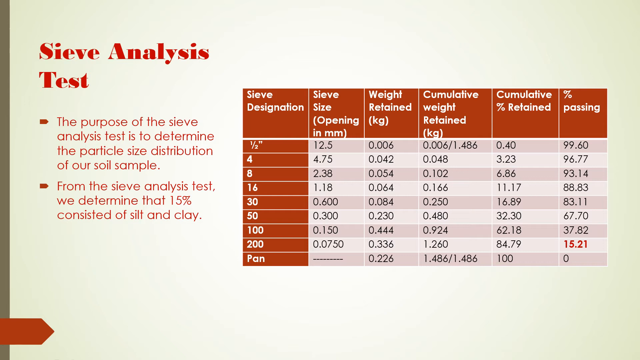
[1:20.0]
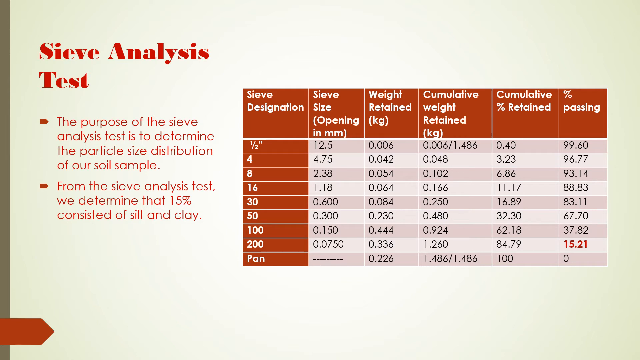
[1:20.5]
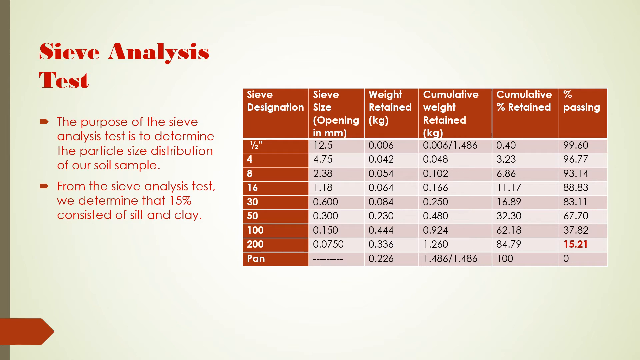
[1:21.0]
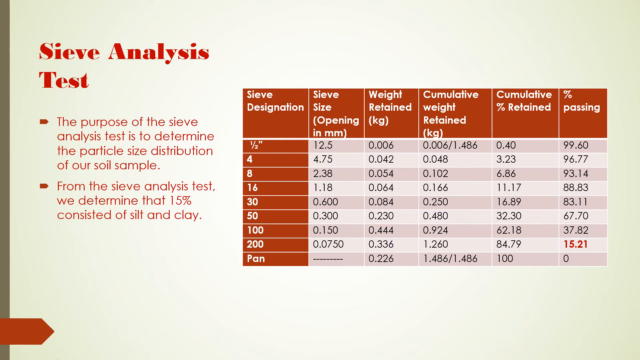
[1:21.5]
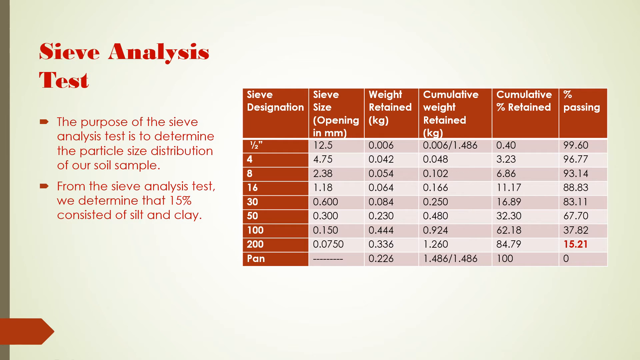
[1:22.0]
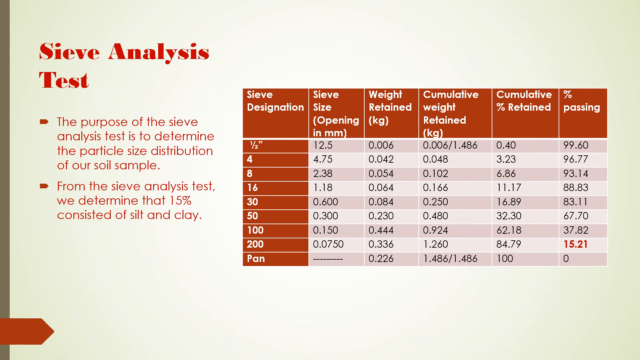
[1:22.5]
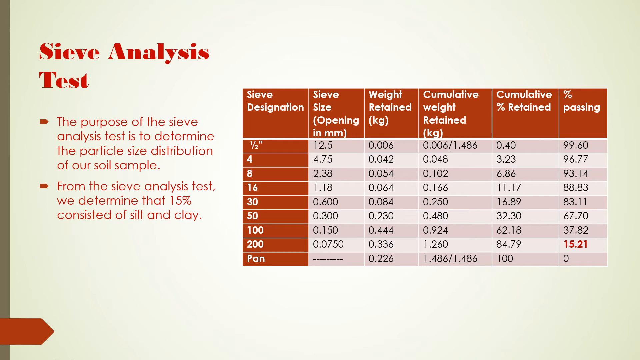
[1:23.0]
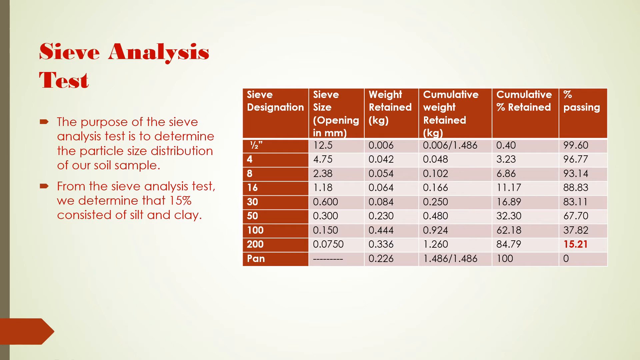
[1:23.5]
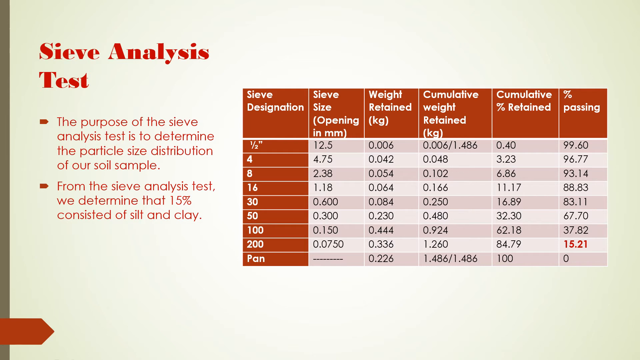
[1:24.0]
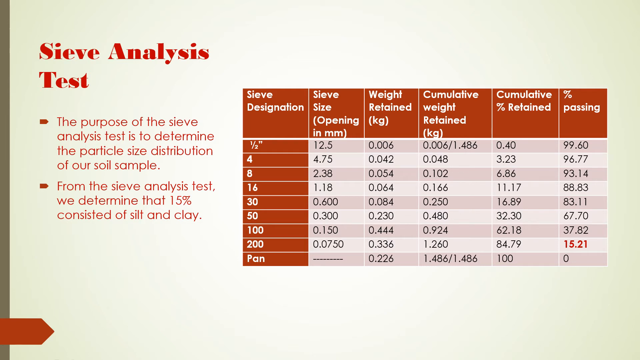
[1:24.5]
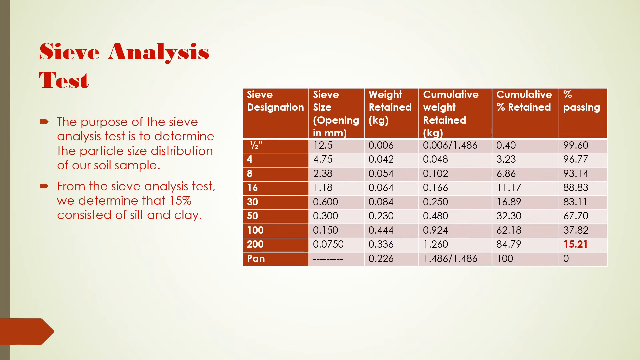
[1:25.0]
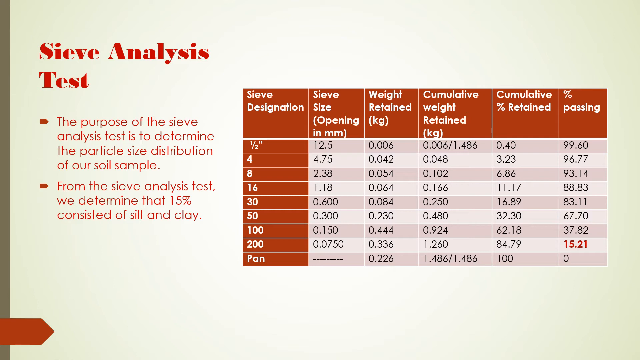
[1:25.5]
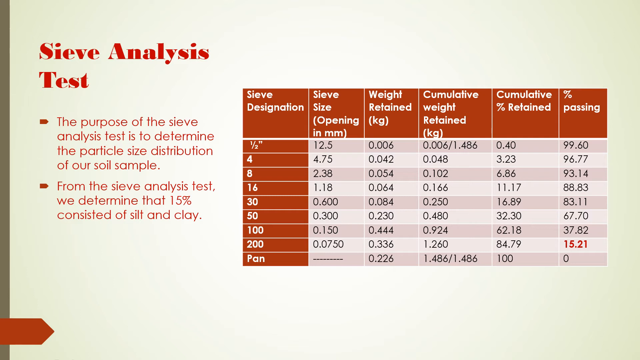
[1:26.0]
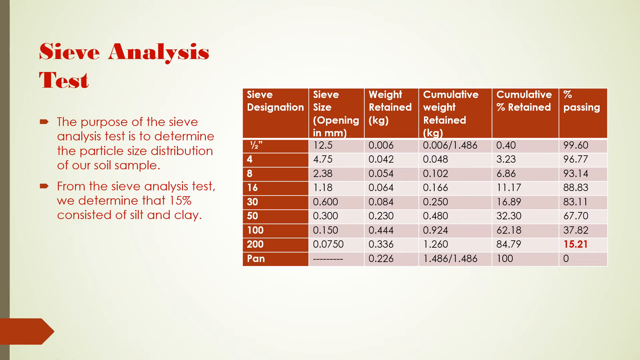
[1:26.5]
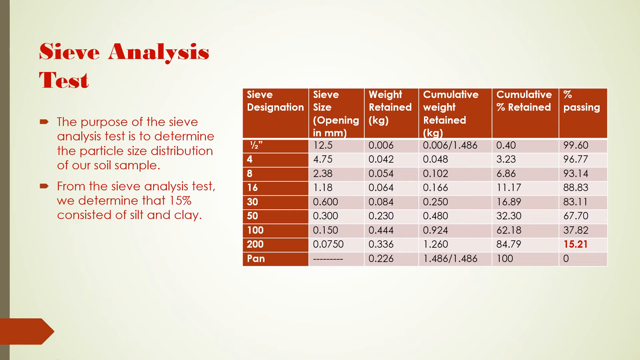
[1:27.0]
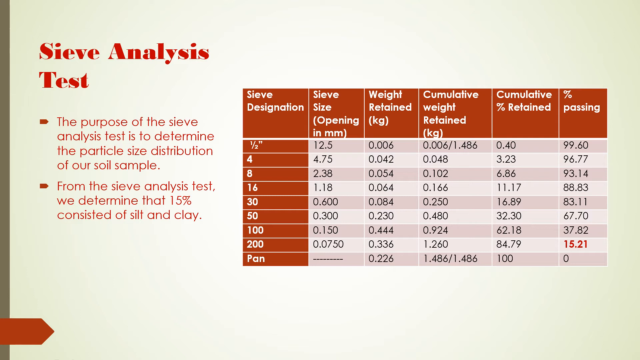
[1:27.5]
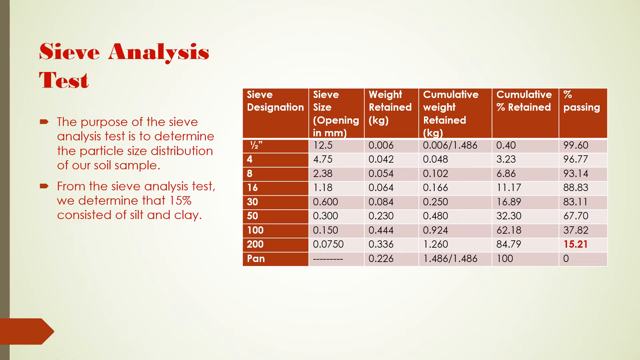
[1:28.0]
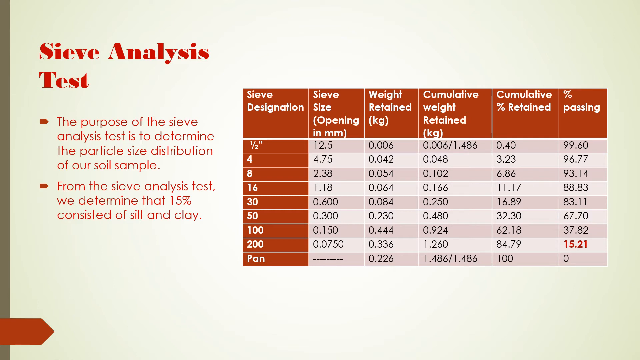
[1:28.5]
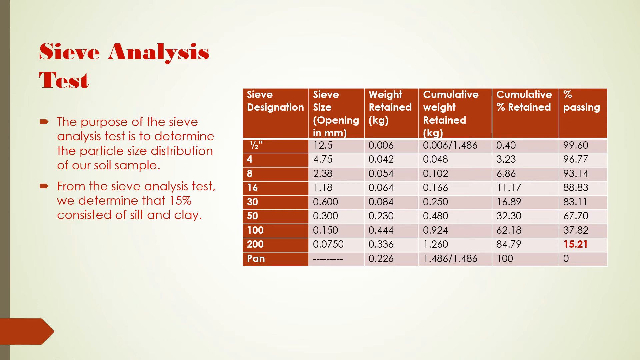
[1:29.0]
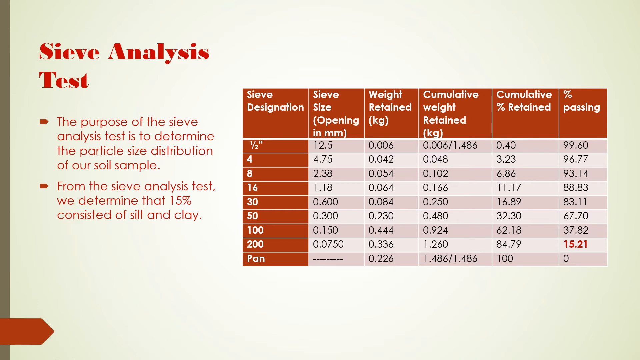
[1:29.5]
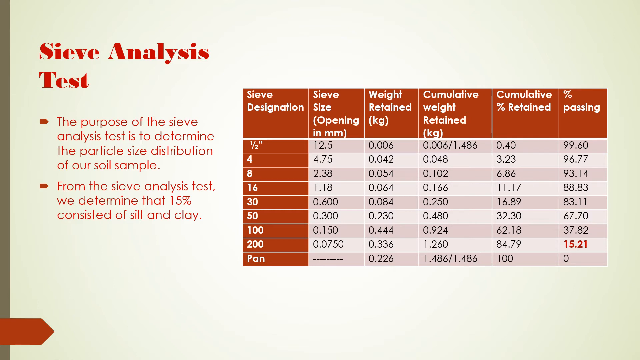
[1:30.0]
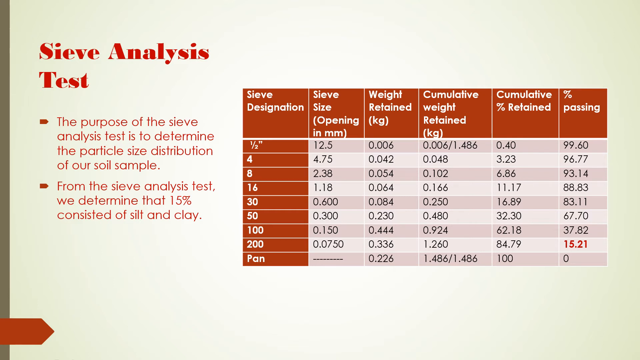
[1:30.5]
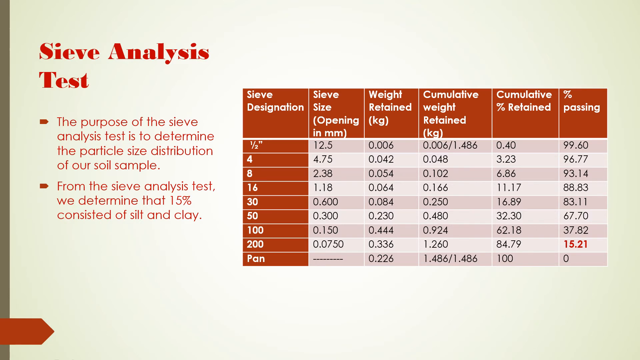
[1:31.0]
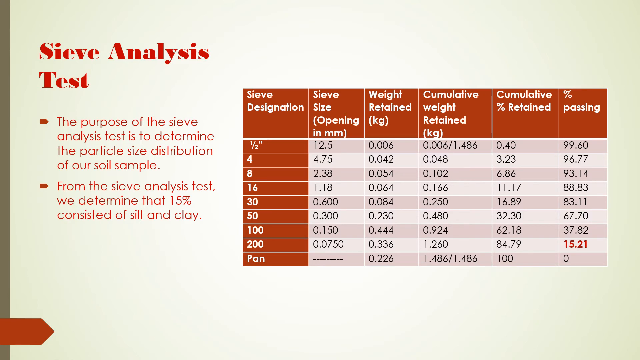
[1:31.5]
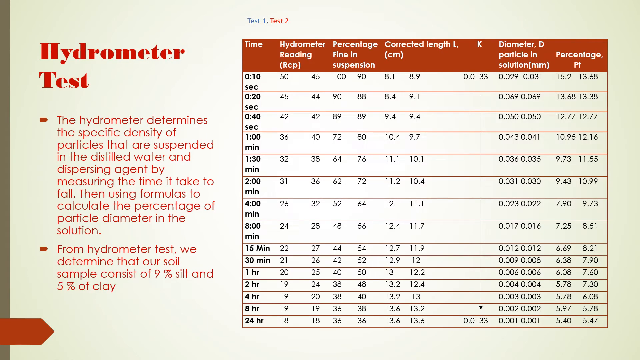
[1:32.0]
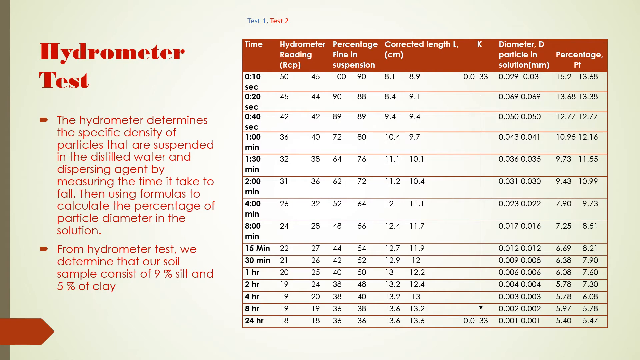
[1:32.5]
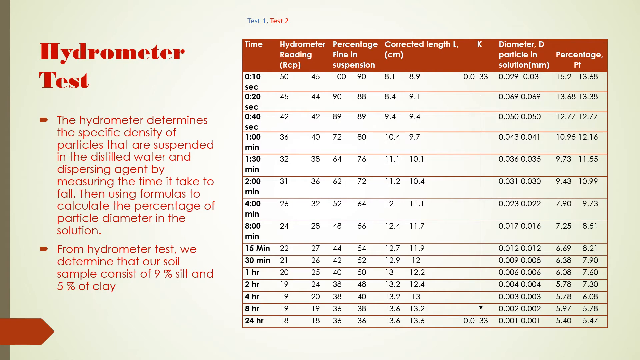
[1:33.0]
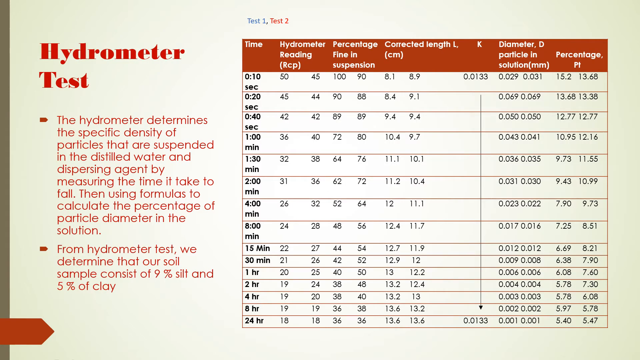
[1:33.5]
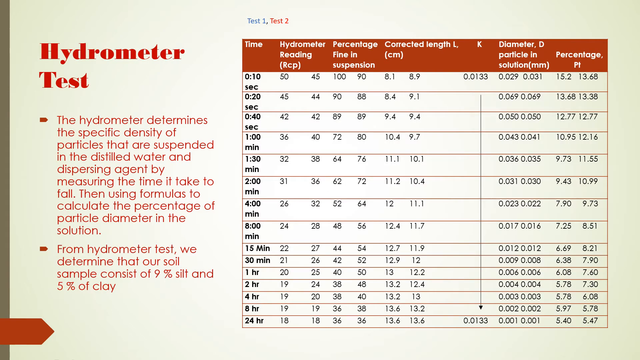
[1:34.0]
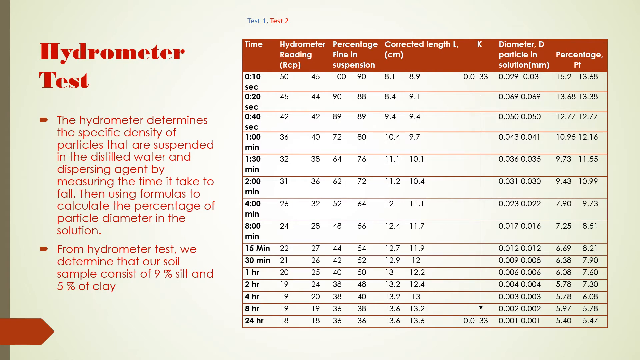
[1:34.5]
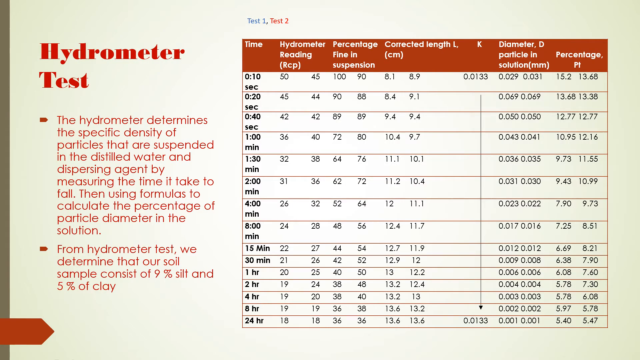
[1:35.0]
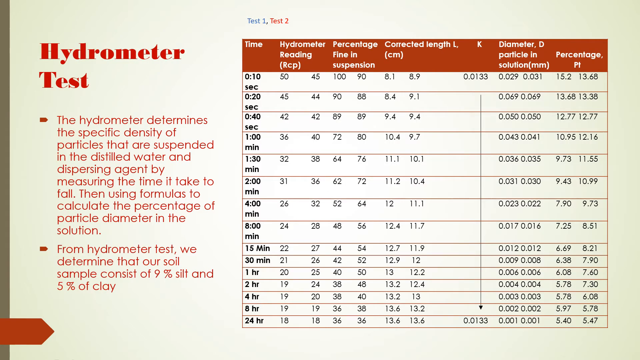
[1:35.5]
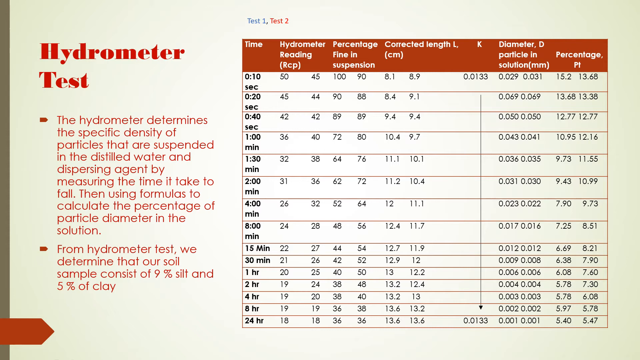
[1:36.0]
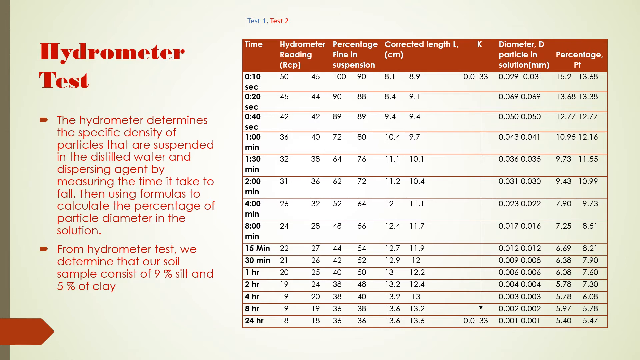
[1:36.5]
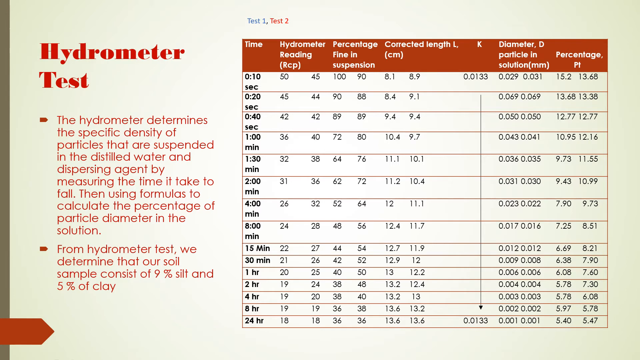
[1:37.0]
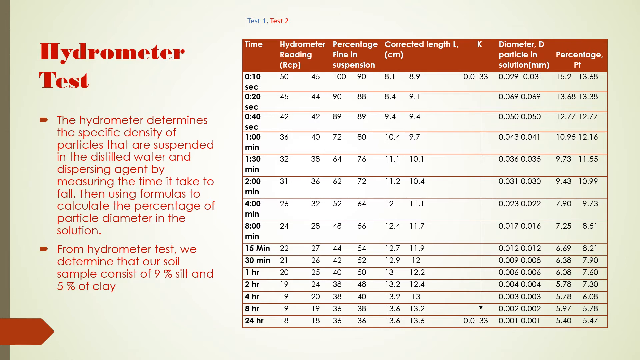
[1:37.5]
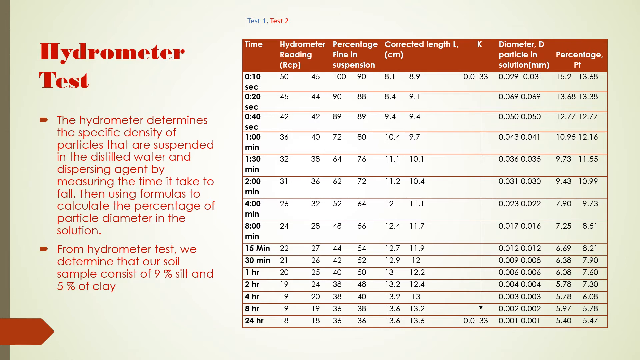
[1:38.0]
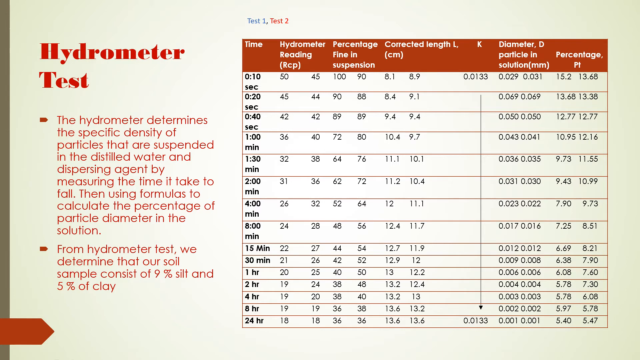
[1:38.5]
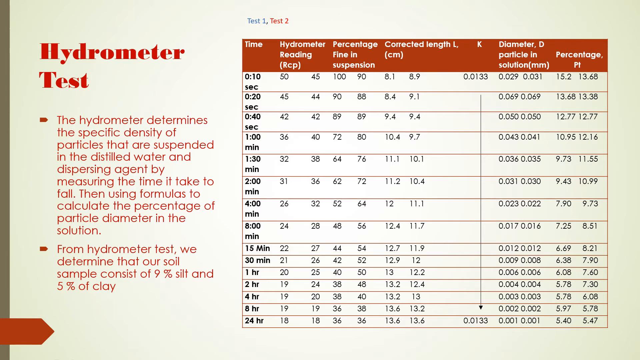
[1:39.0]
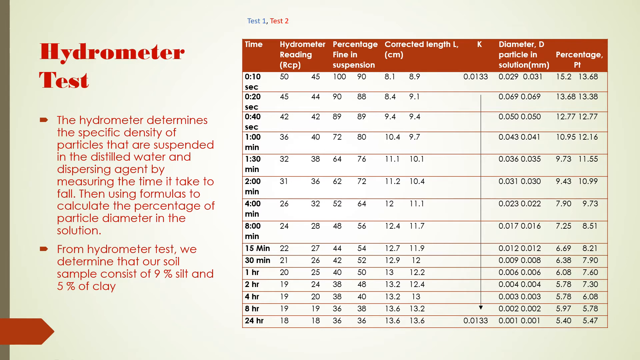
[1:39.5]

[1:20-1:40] A slide has red text at the top reading "sieve analysis test." On the left side it says "the purpose of the sieve analysis test is to determine the particle size distribution of our soil sample," and a second bullet point says "from the sieve analysis test, we determined that 15% consisted of silt and clay." The chart on the right has six vertical columns and nine horizontal columns. Next, a slide has the text "hydrometer test" at the top. On the left-hand side it says "the hydrometer determines the specific density of particles that are suspended in the distilled water and dispersing agent by measuring the time it takes to fall, then using formulas to calculate the percentage of particle diameter in the solution," and a second bullet point says "from hydrometer test, we determined that our soil sample consists of 9% silt and 5% clay." A chart on the right-hand side shows time and hydrometer values.